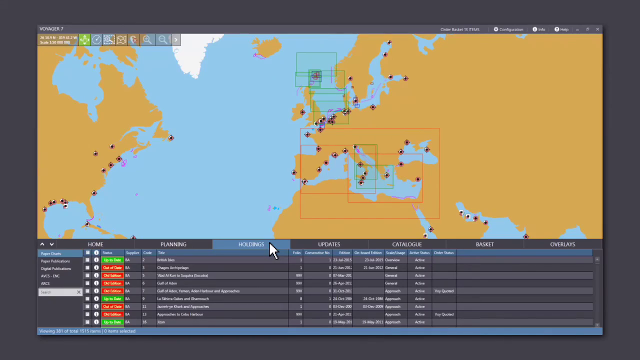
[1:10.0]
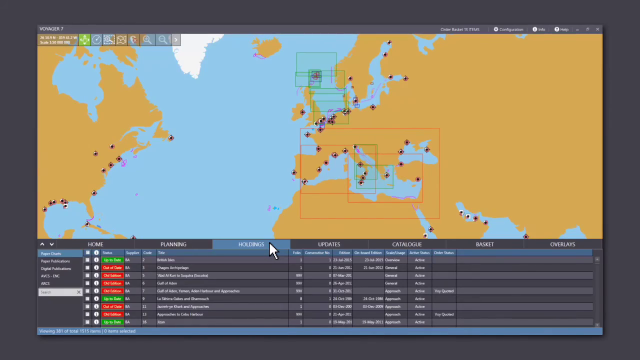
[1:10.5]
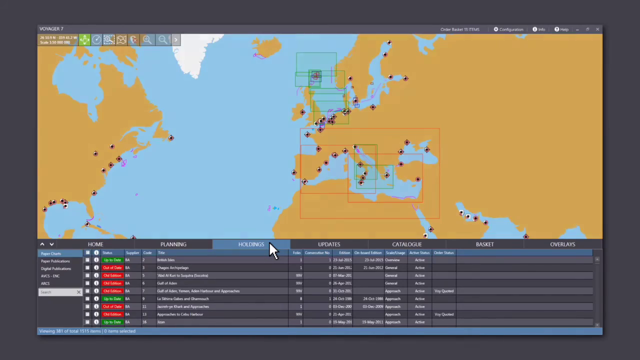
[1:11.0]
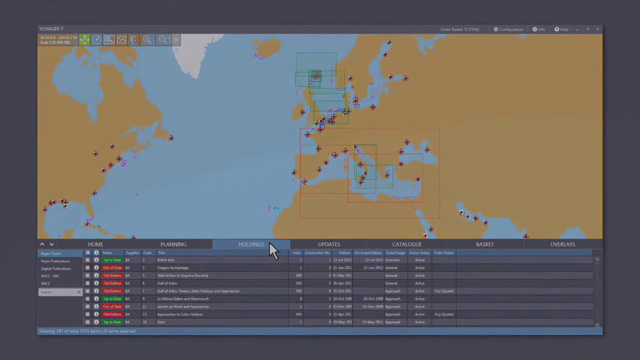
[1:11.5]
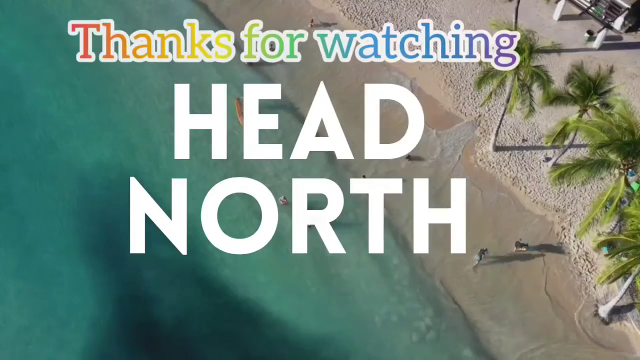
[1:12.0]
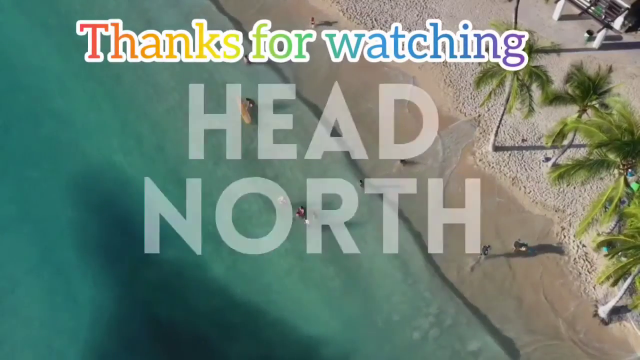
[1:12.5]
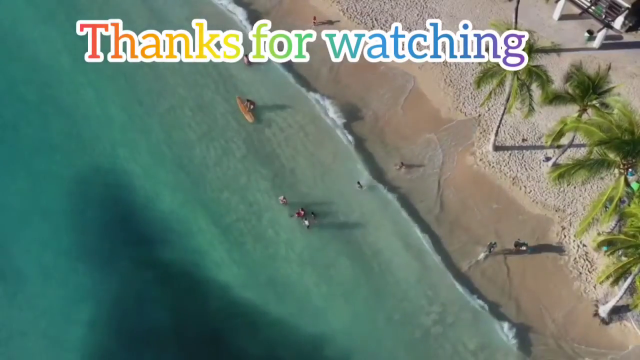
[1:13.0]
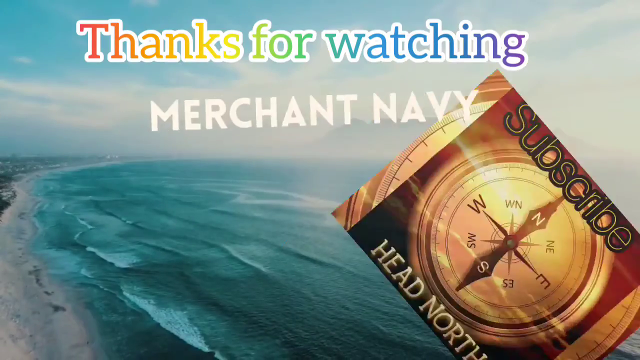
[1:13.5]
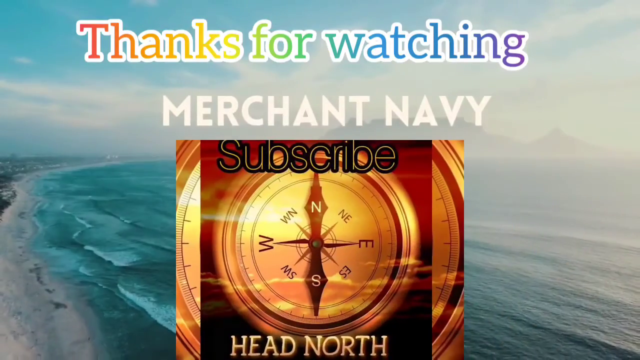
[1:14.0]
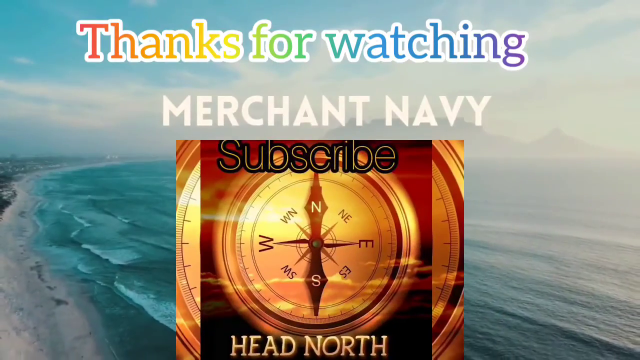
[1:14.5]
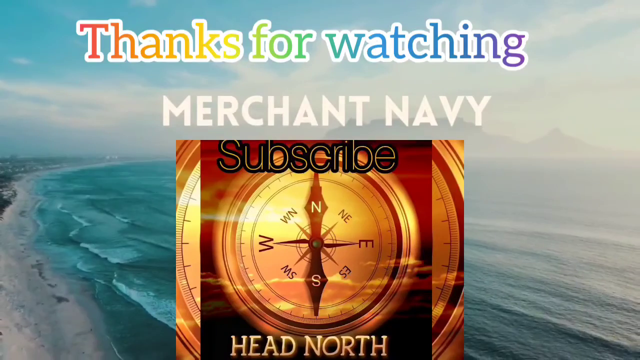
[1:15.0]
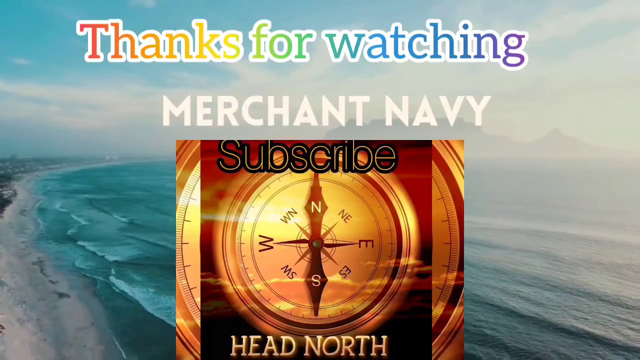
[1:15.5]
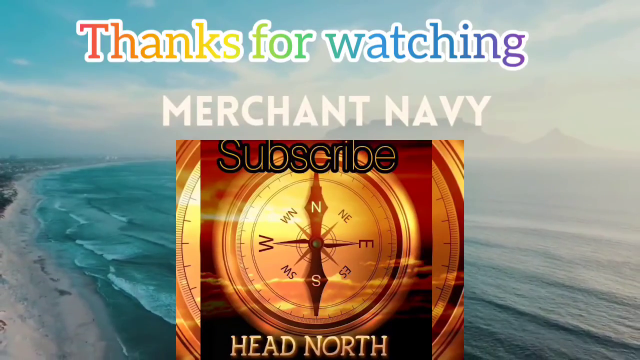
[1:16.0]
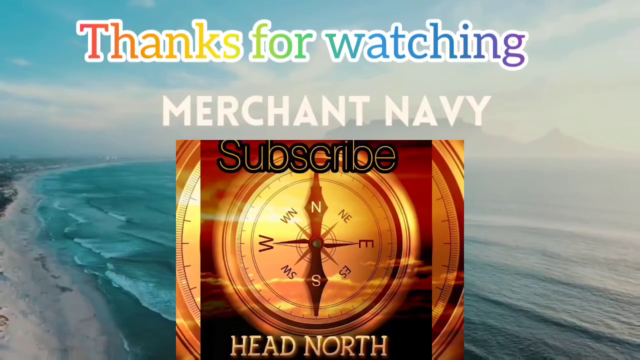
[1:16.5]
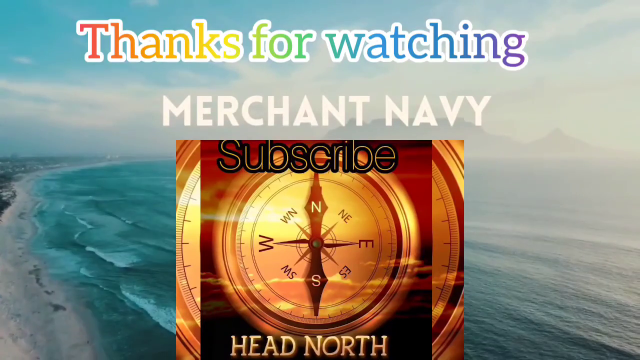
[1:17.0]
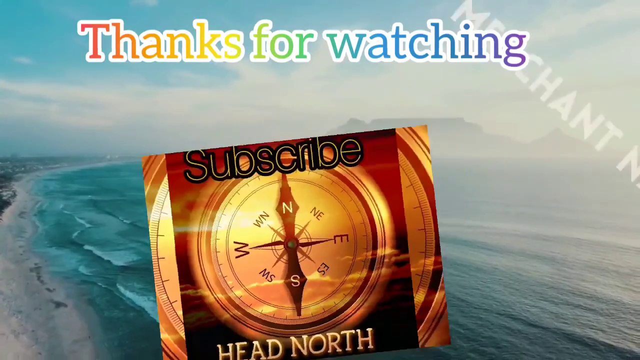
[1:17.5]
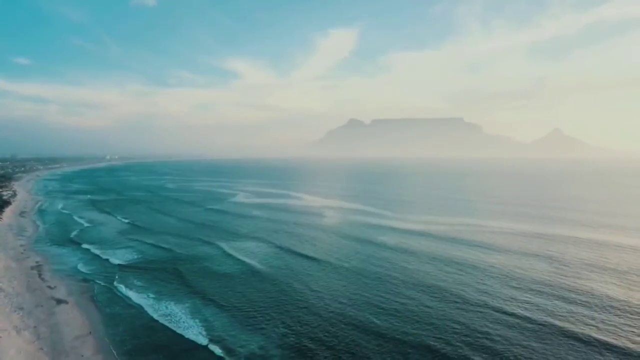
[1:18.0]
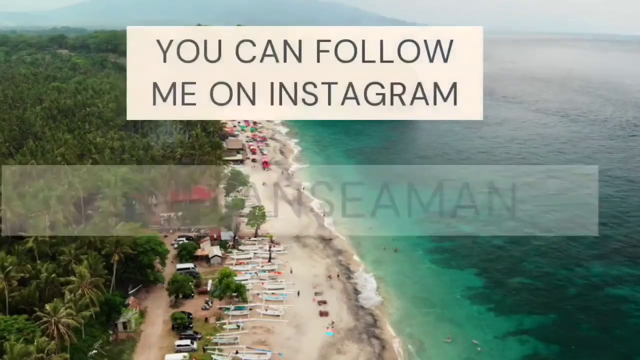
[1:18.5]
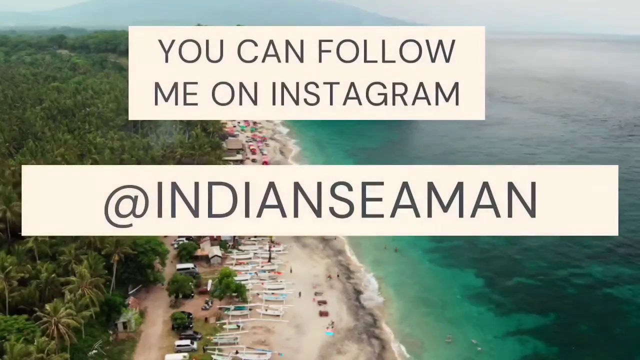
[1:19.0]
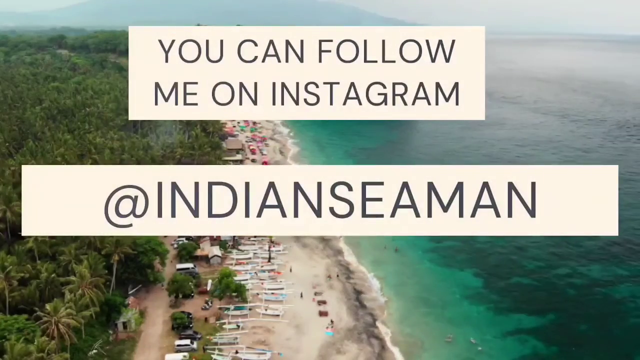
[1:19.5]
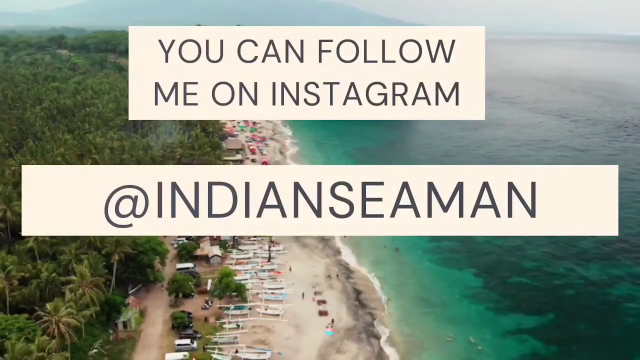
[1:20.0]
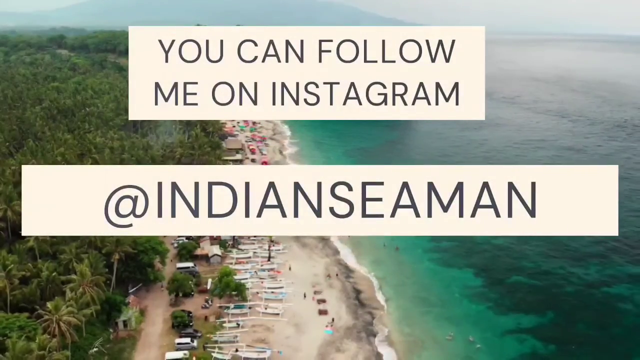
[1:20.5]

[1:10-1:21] A bird's eye view of the beach appears again, with palm trees on the right. People are on the beach, some on the sand and a few in the water, and the water is a teal color. At the top of the screen is the text "thanks for watching," and in big, bold, white letters it says "head north." Then "Merchant Navy" appears, with "subscribe" right below it, along with a gold and brownish bronze compass that looks kind of like a ship's compass. The background beach scene has changed somewhat: the sky is visible, the view overlooks the entire ocean, there are mountains in the background, and more of the shore is visible. The video then cuts to another scene on the beach with more people and more greenery, seemingly showing a bit more of the beach, as well as boats and some people who possibly live in that area. Text on the screen says "you can follow me on Instagram at @IndianSeaman."